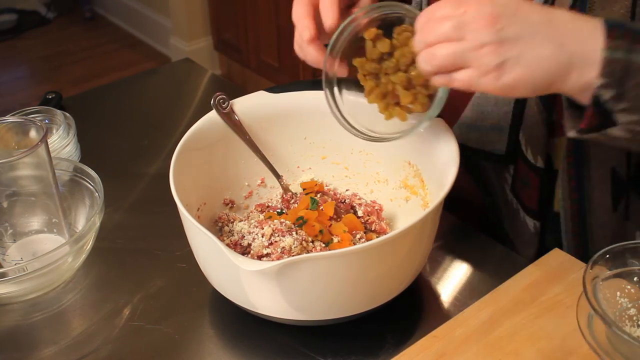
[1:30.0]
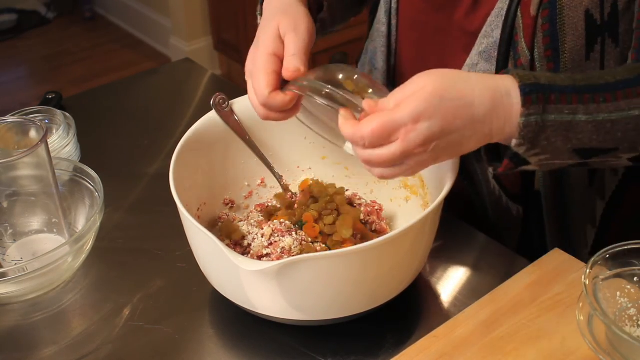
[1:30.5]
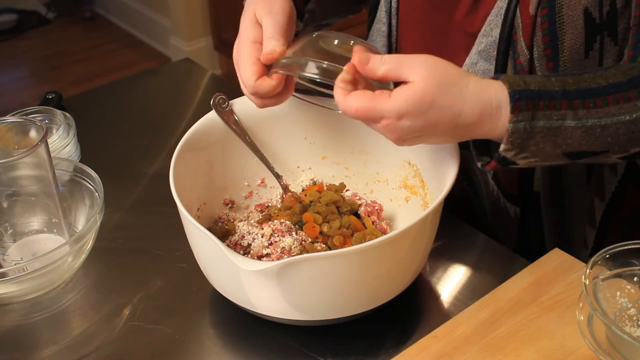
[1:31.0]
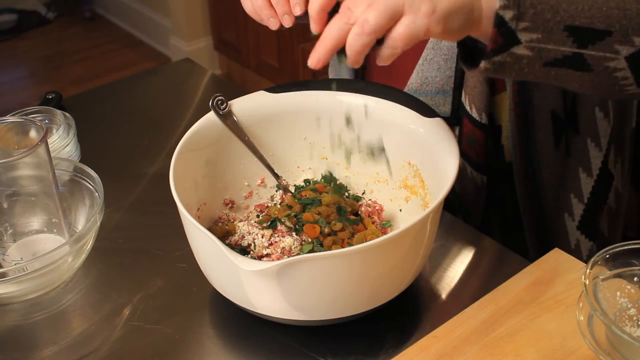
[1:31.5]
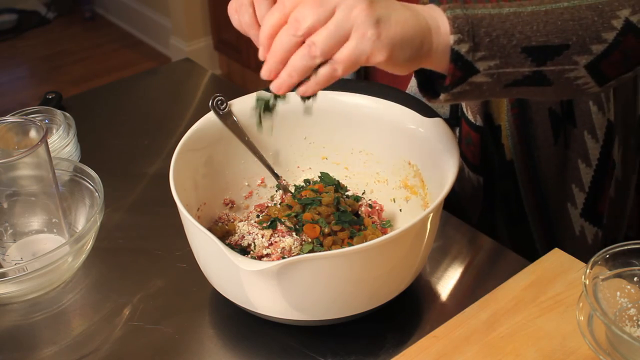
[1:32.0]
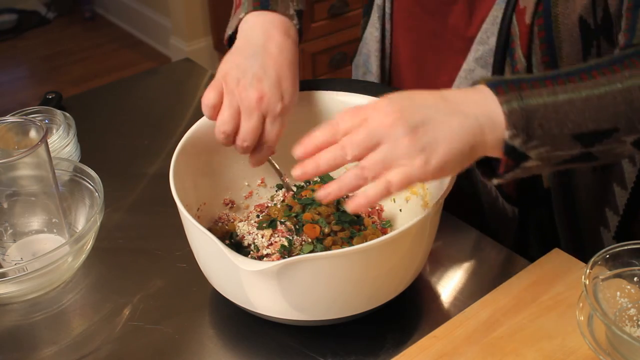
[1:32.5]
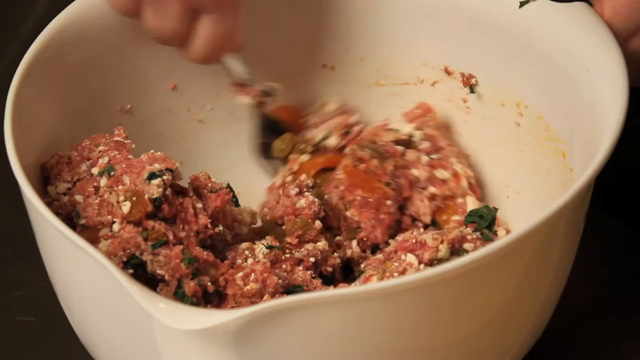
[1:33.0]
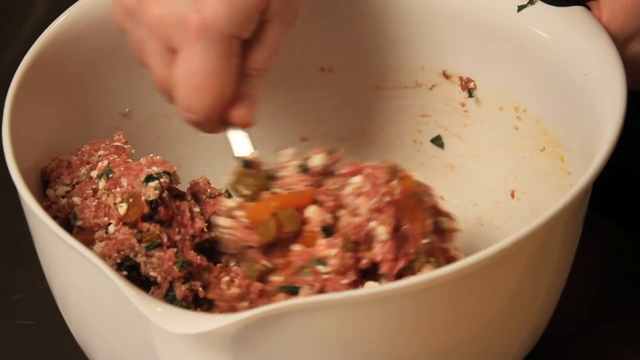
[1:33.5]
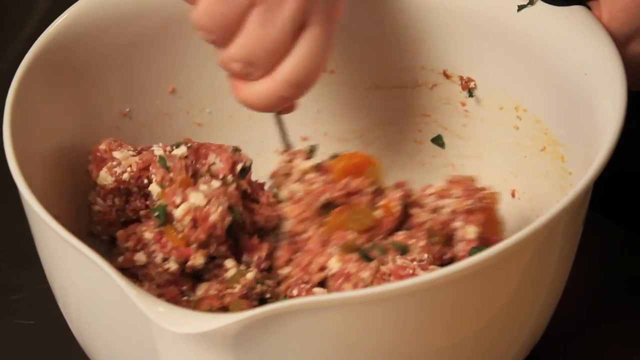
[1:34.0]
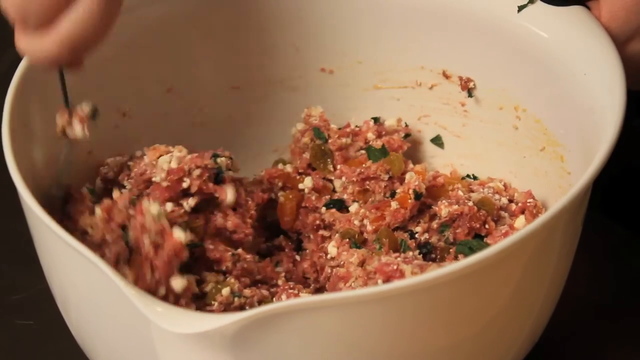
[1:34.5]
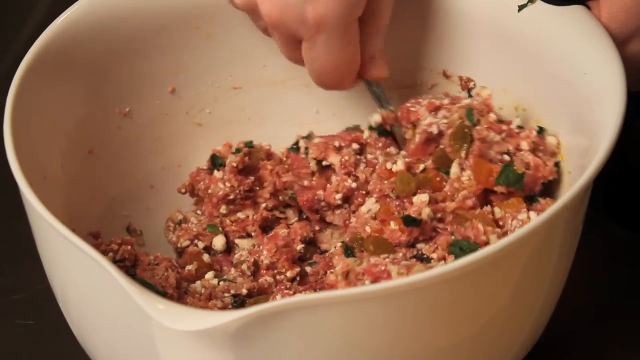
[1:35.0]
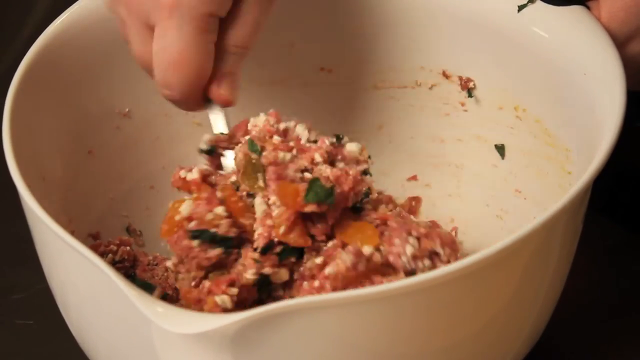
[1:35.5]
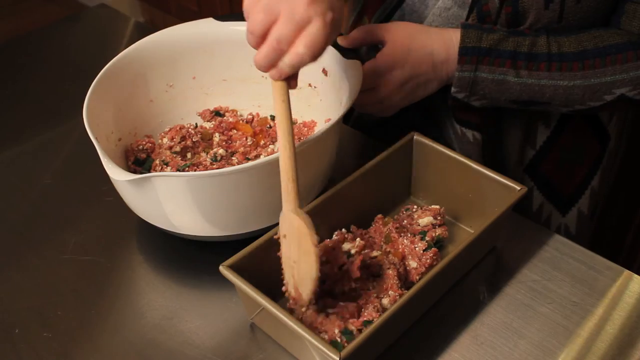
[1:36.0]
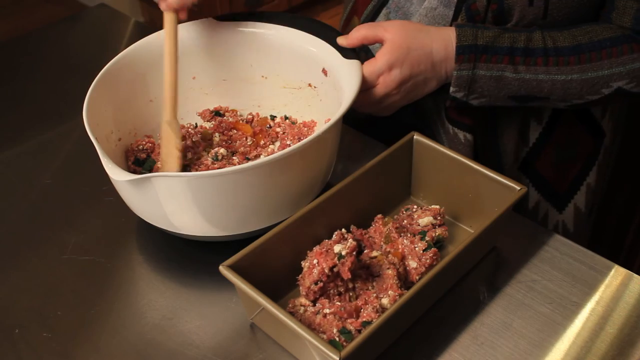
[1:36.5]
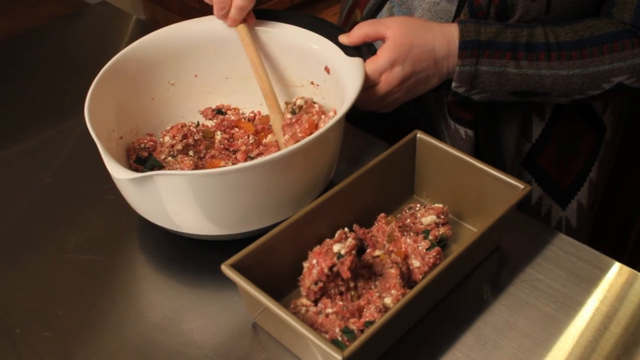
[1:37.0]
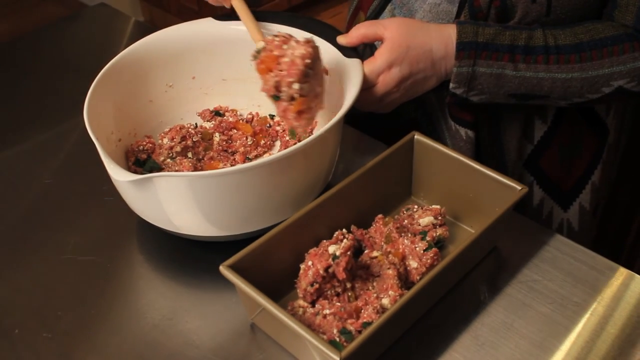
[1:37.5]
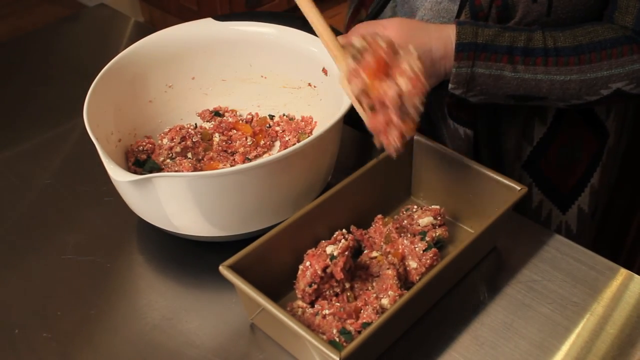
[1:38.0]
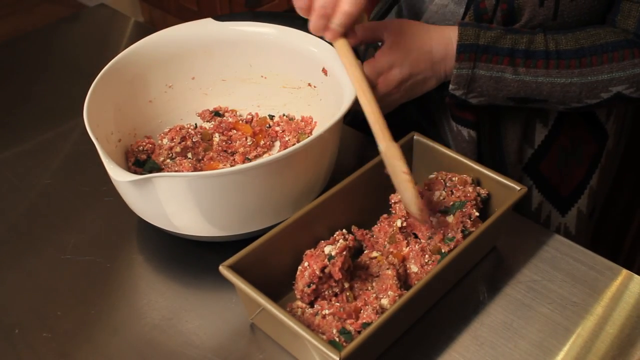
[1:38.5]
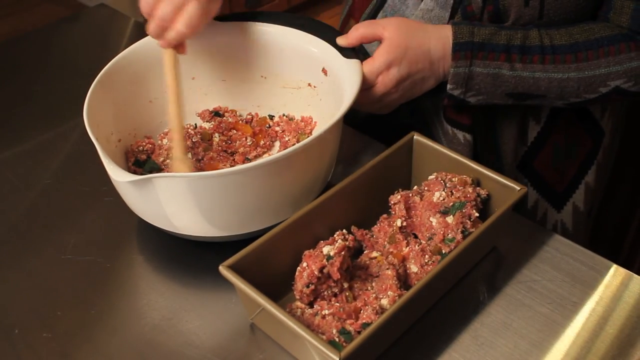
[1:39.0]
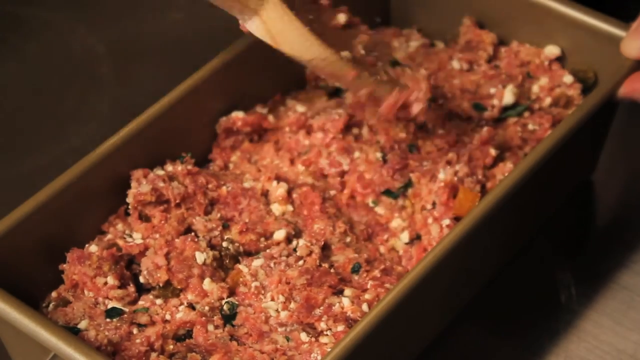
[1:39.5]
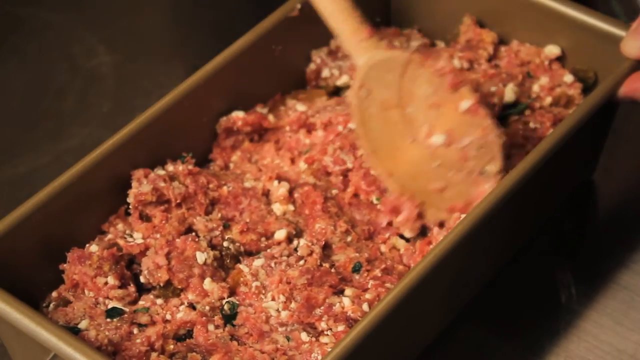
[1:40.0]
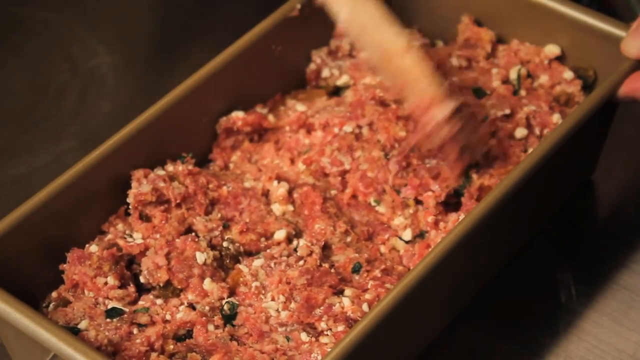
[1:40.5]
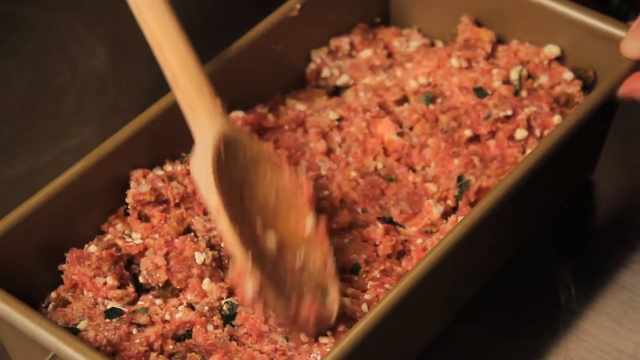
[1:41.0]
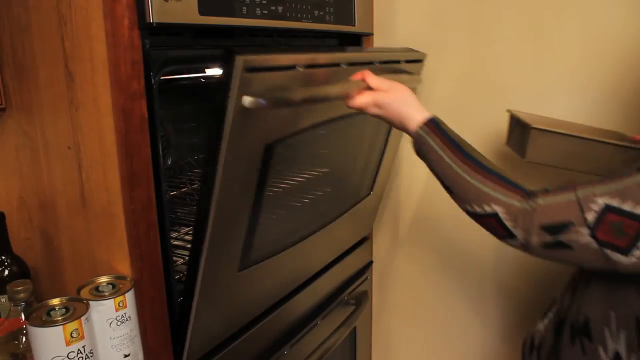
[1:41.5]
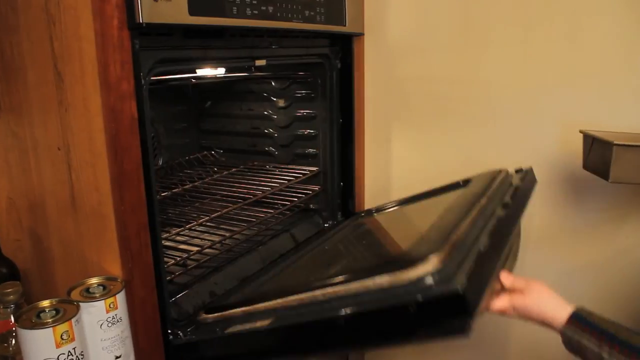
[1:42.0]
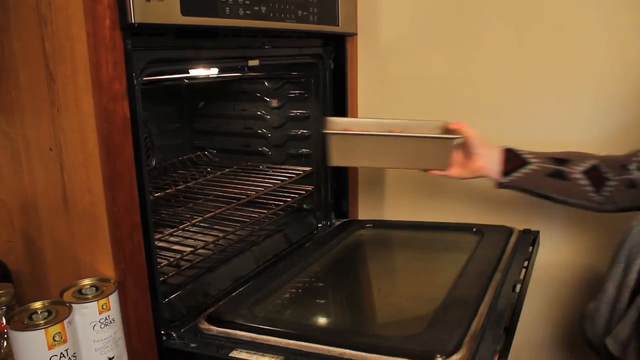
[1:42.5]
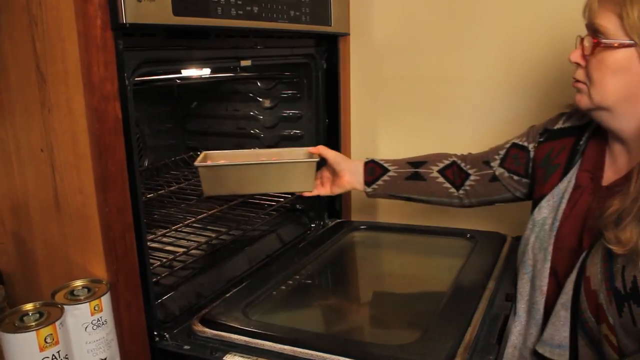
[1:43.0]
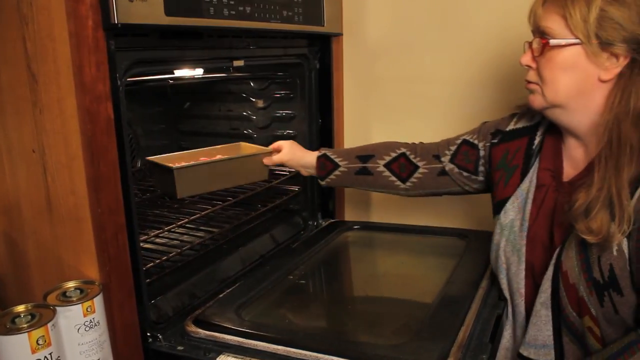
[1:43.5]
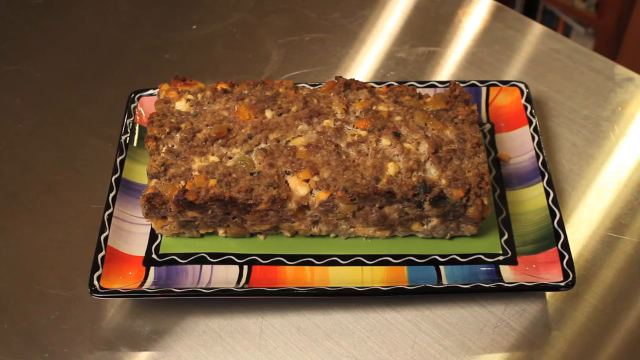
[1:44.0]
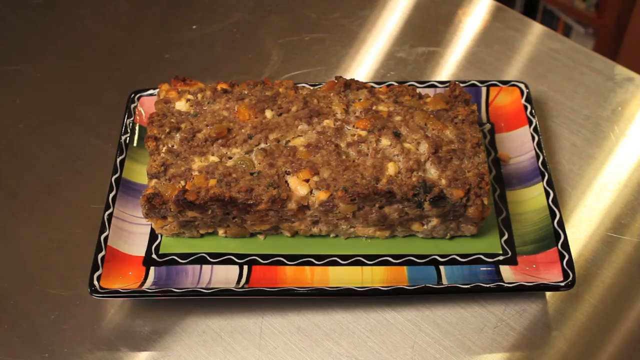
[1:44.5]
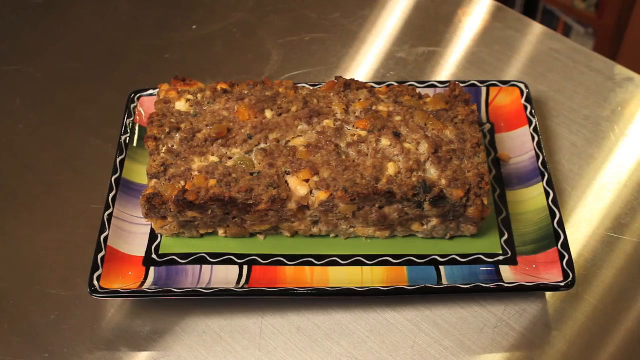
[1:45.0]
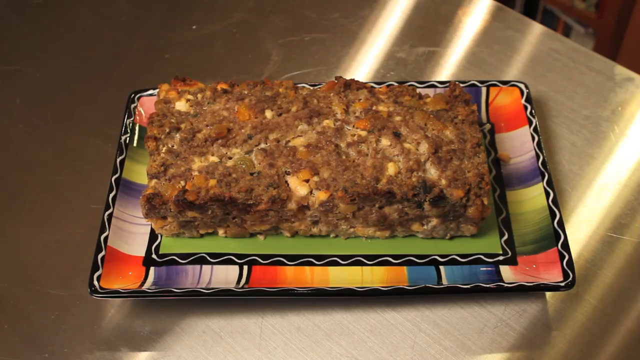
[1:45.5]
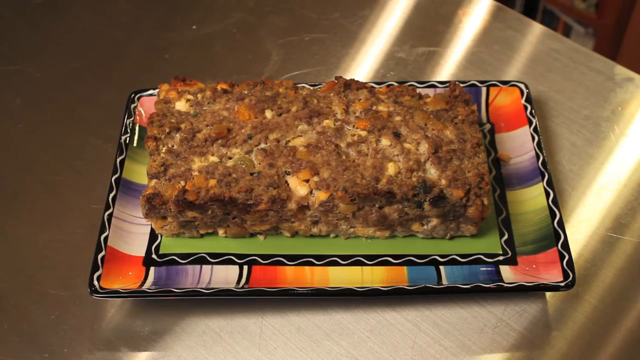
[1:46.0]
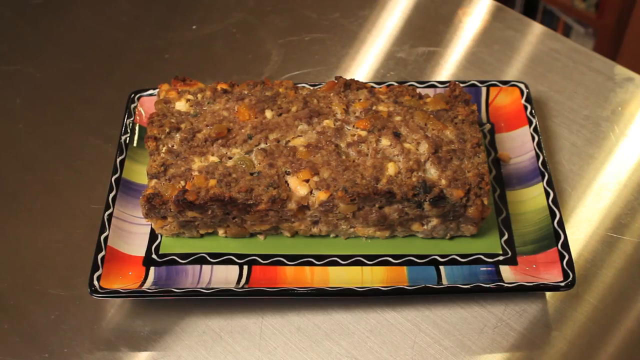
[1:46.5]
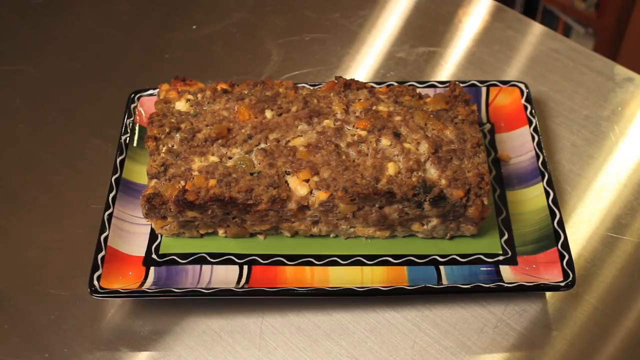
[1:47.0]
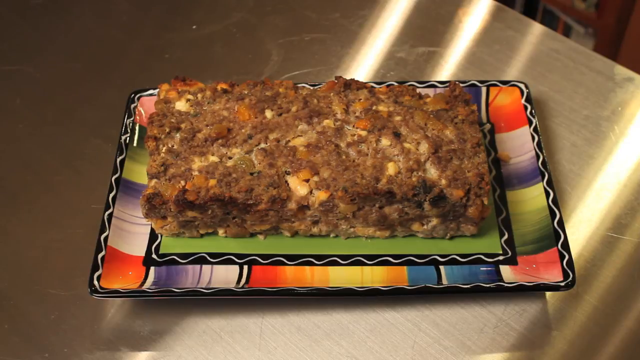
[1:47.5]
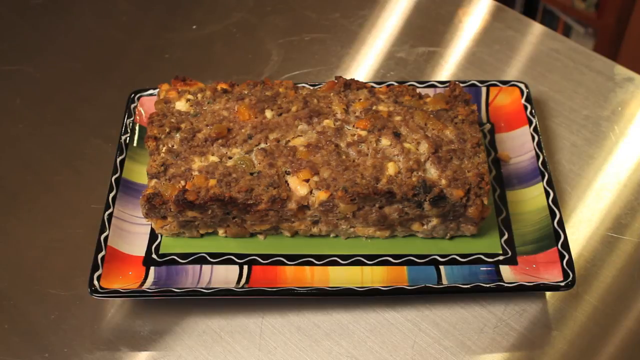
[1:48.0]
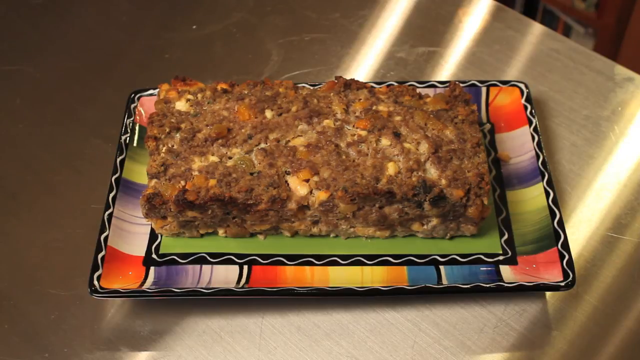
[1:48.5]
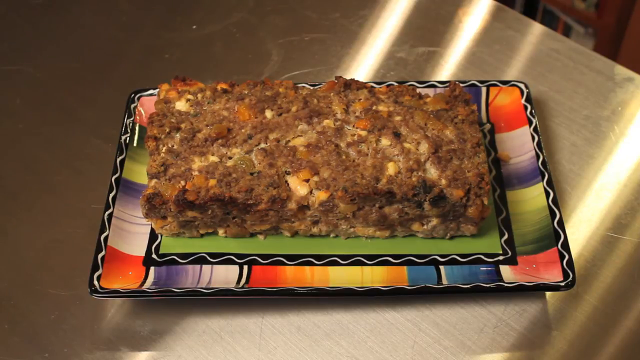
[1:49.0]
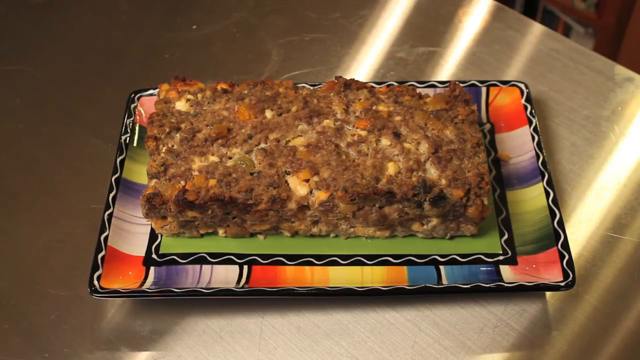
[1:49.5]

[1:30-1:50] The woman continues adding ingredients; what looks to be Parmesan cheese has gone in, and she adds a couple of other unidentified ingredients. A loaf pan is next to her, and she scoops the ground beef mixture from the white mixing bowl into the loaf pan, pressing it down tightly. She opens the oven with her left hand and moves the loaf pan onto the top rack with her right hand. The dish looks like a lasagna but unlike a typical one, maybe a meatloaf of some kind, and looks strange. She puts the loaf into the oven and closes it.